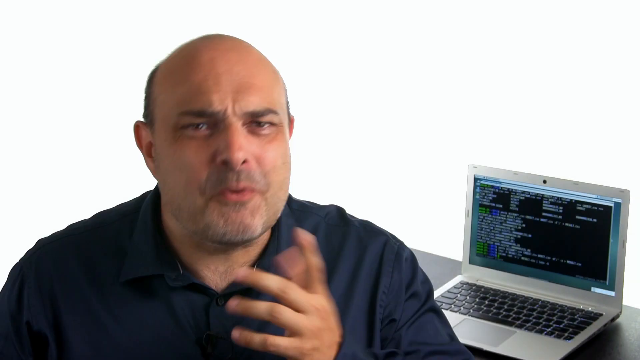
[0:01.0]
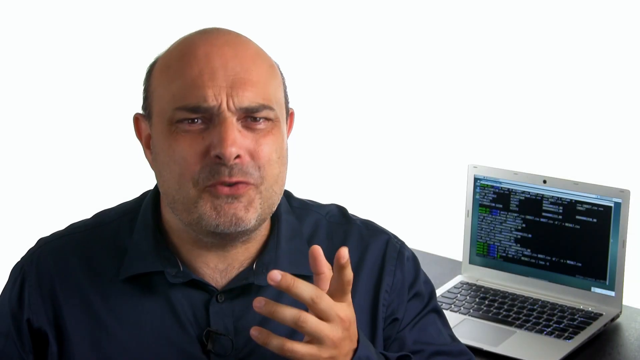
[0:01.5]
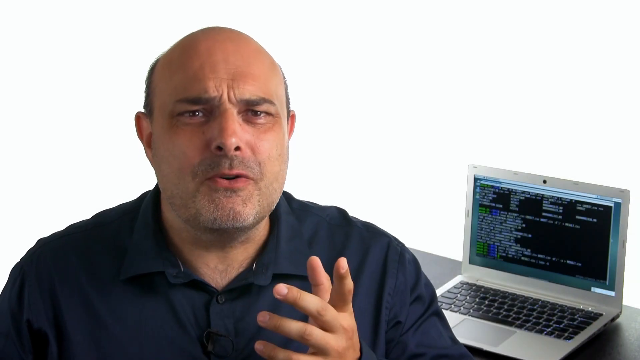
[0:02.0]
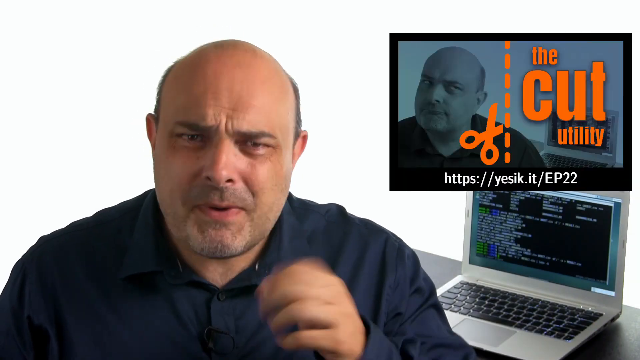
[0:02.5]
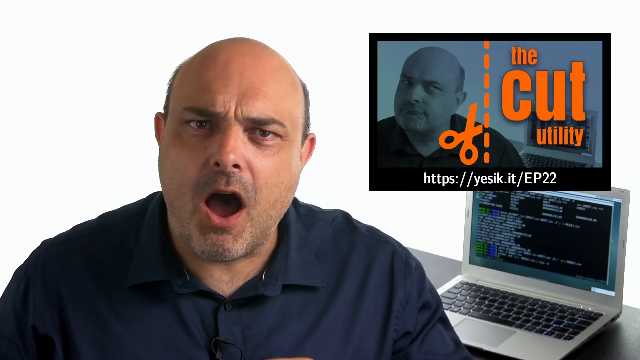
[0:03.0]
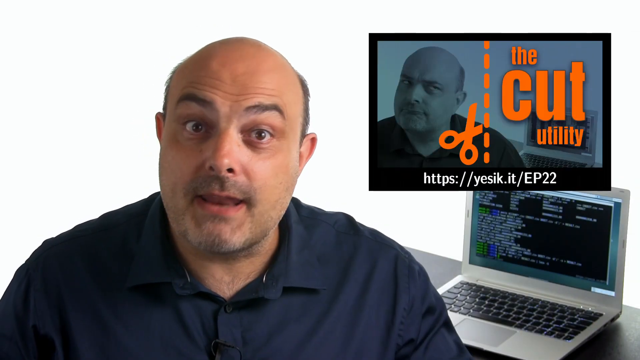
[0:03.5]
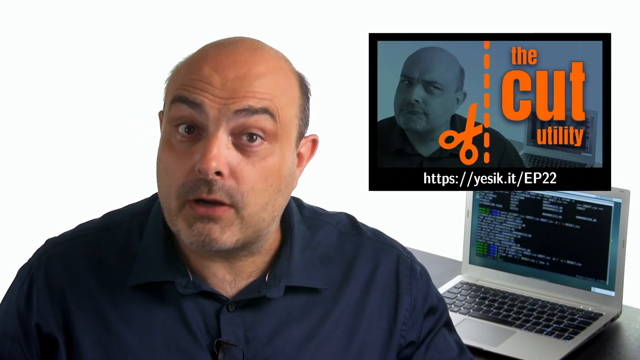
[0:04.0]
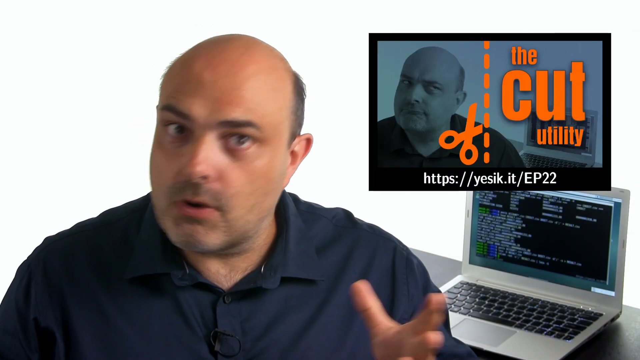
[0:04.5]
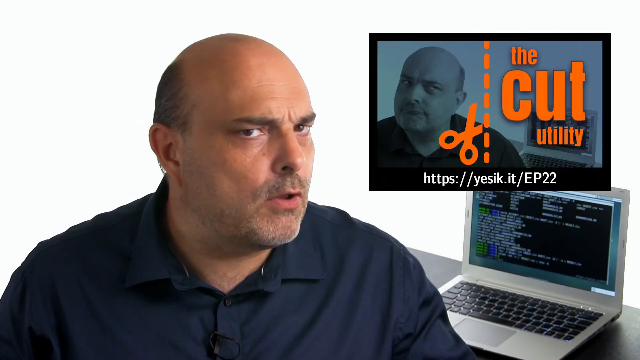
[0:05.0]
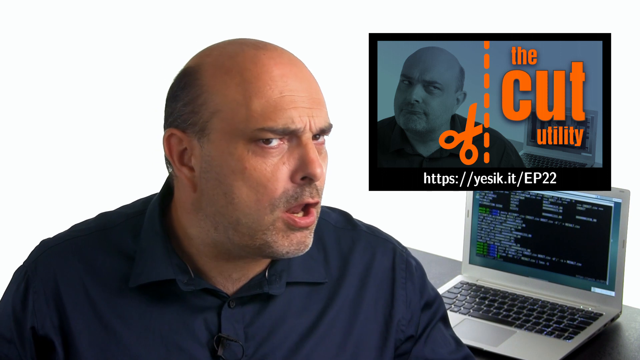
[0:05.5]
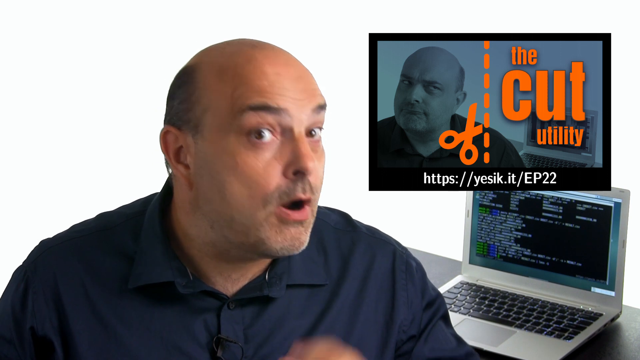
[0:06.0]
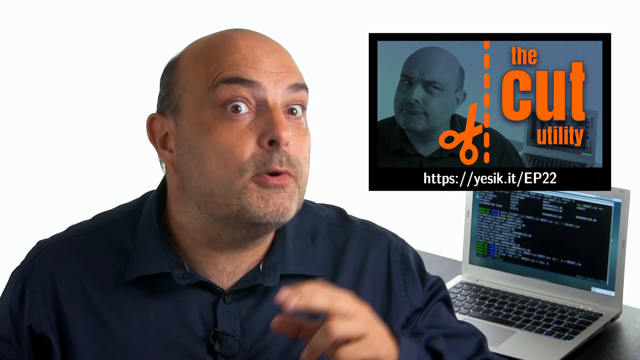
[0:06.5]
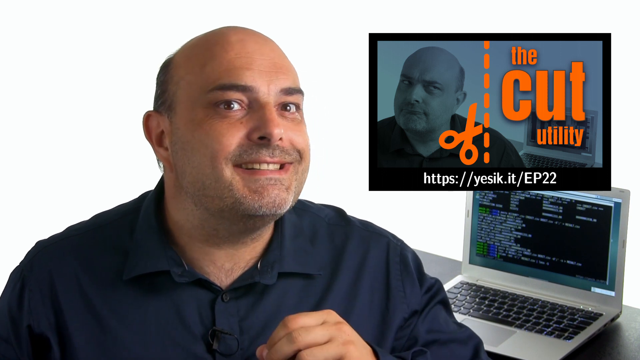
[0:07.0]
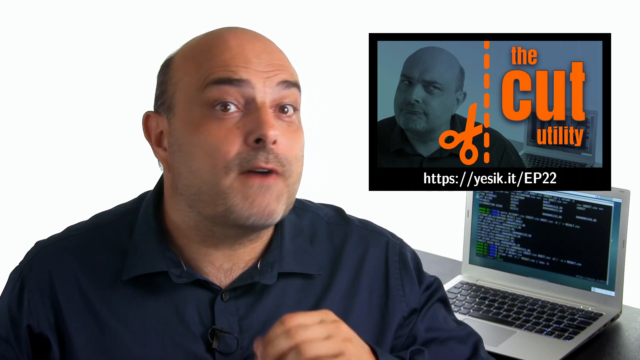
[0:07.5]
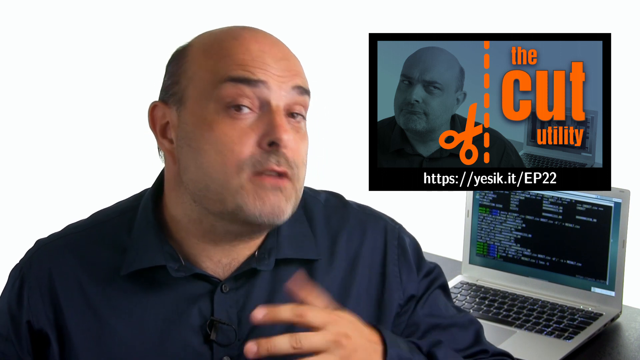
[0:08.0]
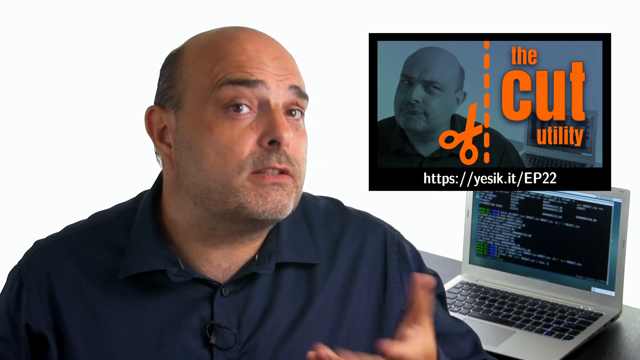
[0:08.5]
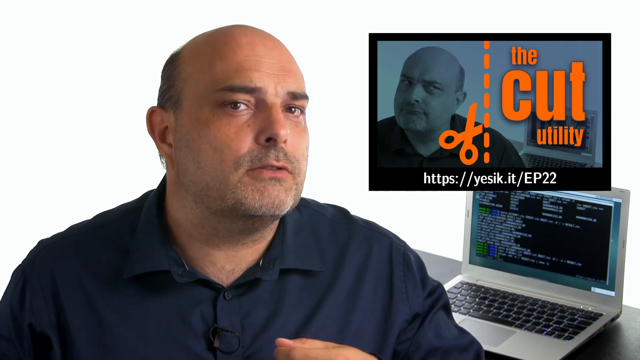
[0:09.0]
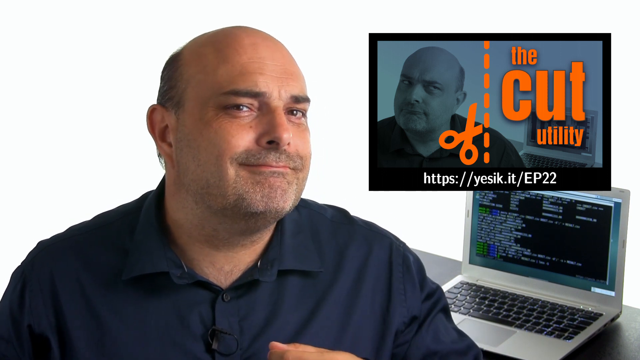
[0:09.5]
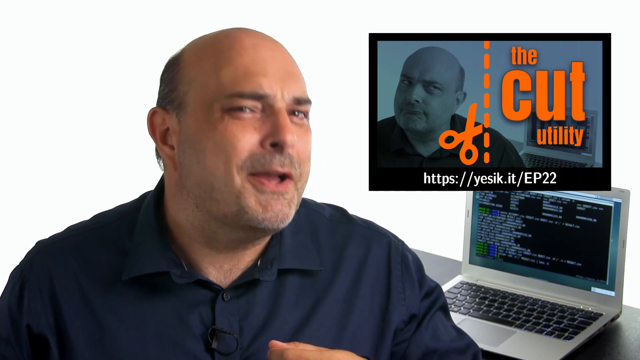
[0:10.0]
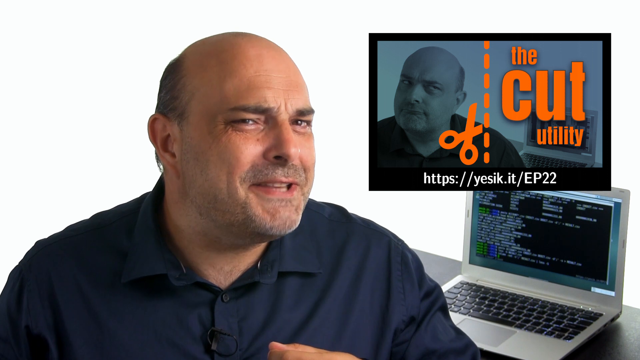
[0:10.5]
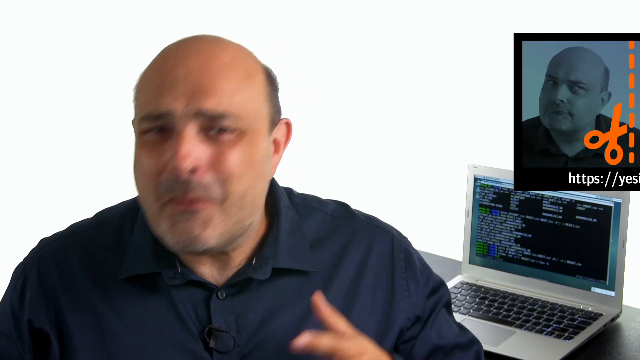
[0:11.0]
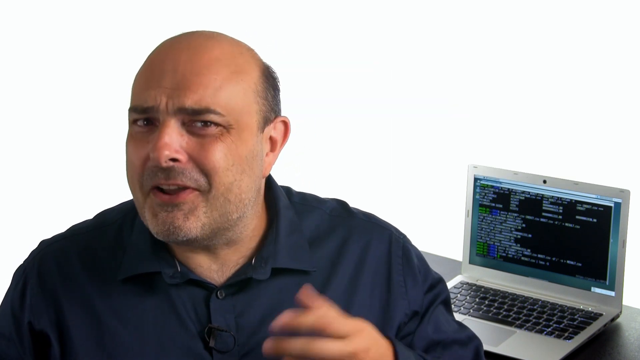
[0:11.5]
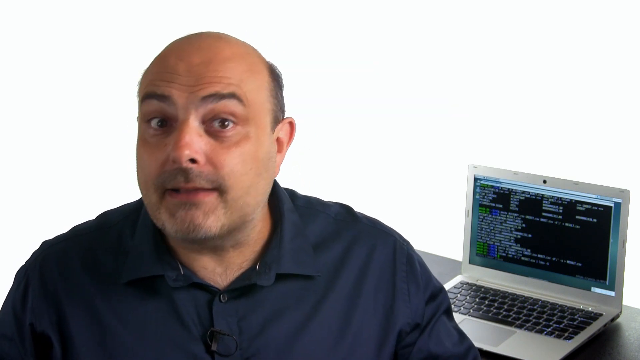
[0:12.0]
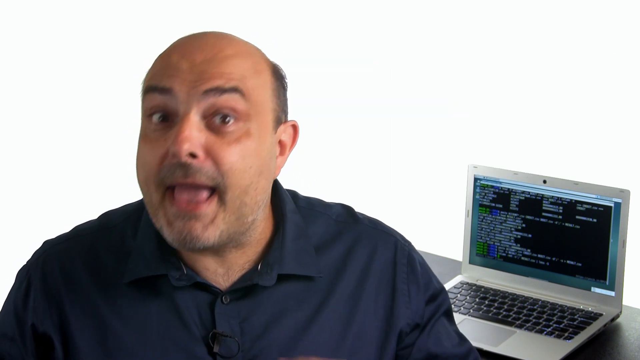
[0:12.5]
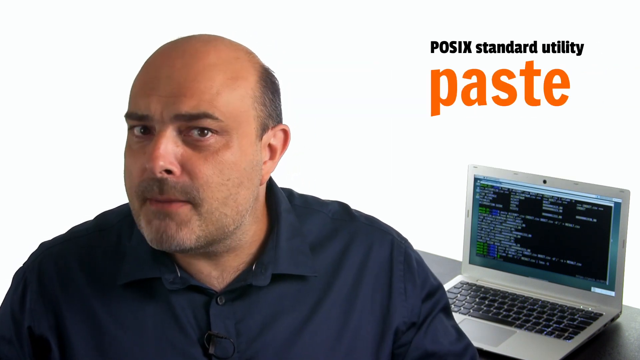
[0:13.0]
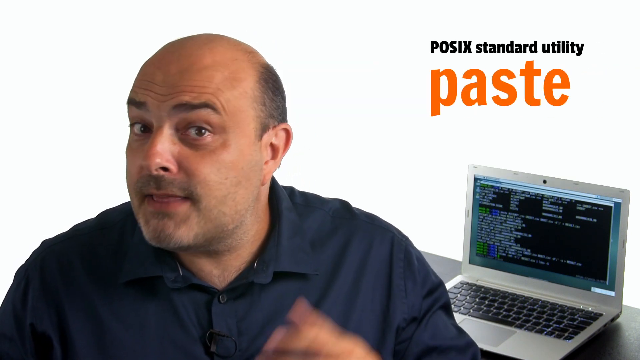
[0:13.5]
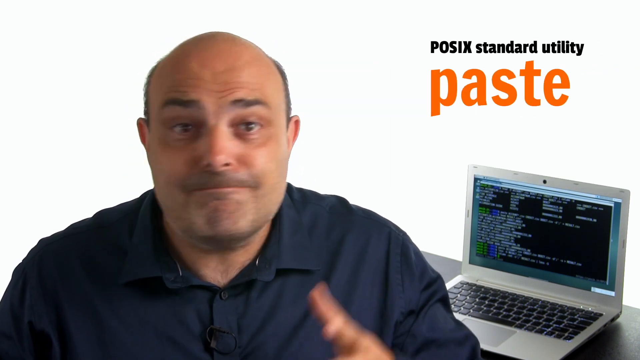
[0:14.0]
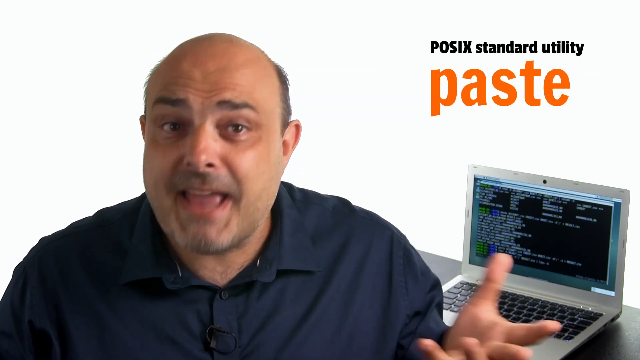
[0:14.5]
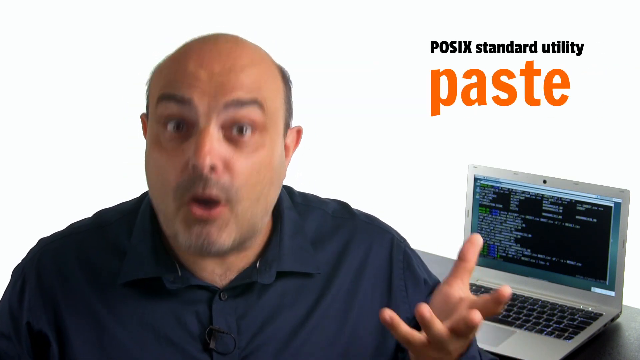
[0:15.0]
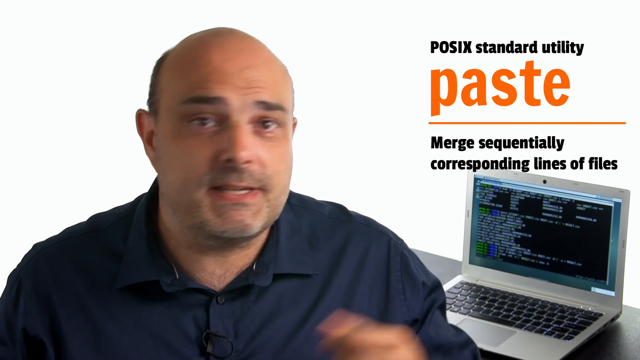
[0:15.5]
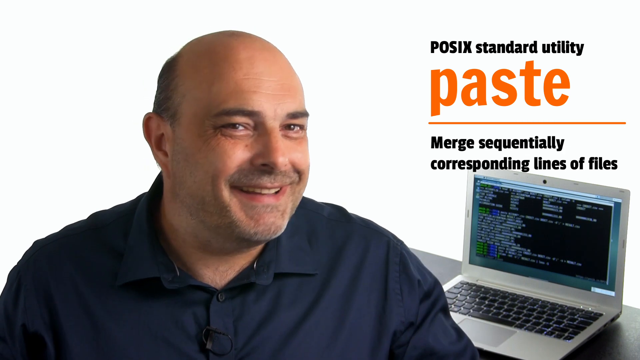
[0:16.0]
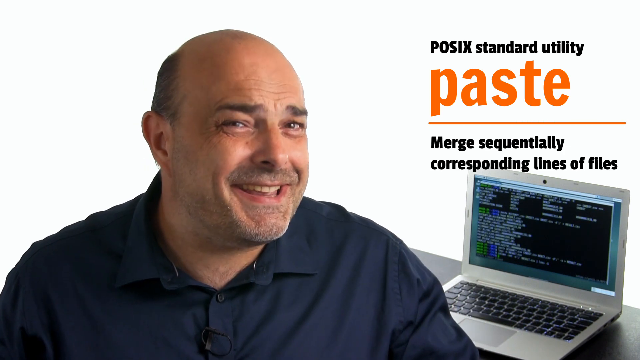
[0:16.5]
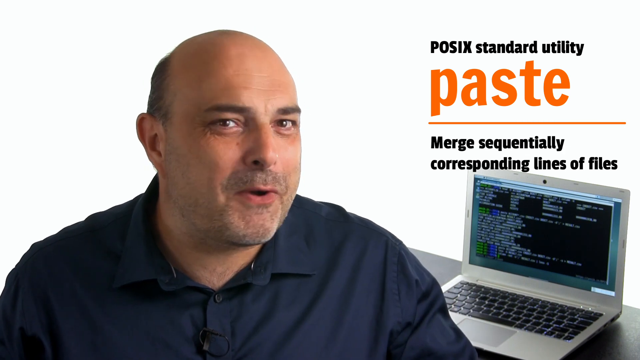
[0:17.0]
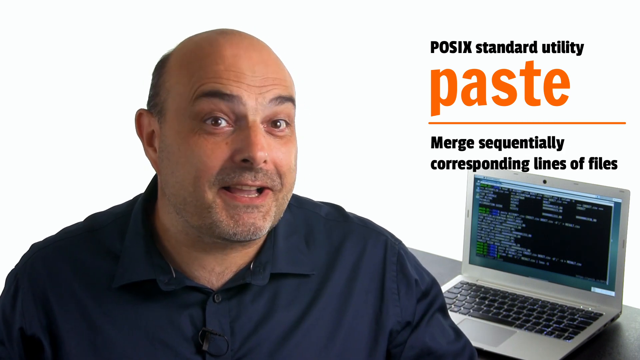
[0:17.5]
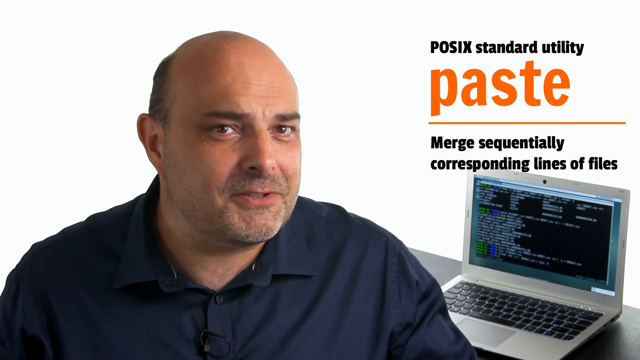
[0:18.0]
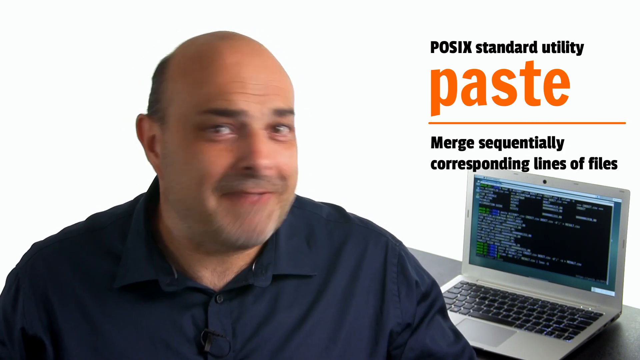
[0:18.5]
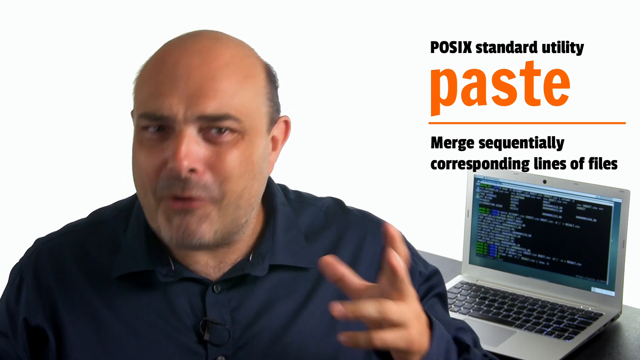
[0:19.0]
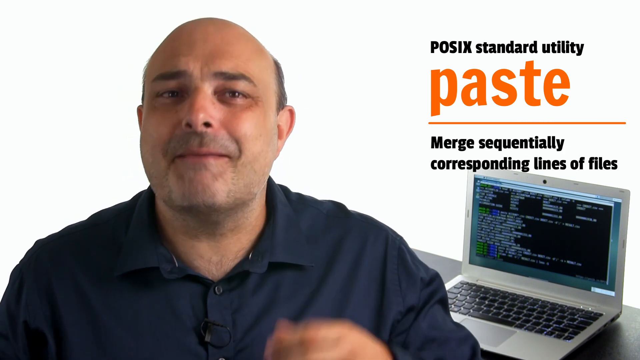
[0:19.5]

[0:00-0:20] A man is on the left side of the frame, extending a little past halfway across, visible from the shoulders up. He is balding on top with short hair on the sides, has a very small hint of stubble, and wears a blue polo shirt. Behind him is a white background, and down to the right is an open gray laptop with black buttons and a black screen covered in white text. The man looks forward and raises his right hand, showing the back of his ring, middle and pointer fingers with his thumb up, shaking it a little. He leans his head to the right and leans in a little. A black-bordered inset containing the man's head then comes in from the right. On its left is a pair of orange scissors reaching down to his chin, with a dotted line through the center. To the right, text reads "the cut utility," with a link and the episode number below it. In the small inset video, his chin is turned to the left and his head is kind of tilted to the right at the top. He raises his eyebrows, raises his right hand, kind of waves it out and back down, turns his head to the right while squinting, and raises his eyebrows as he moves his hand back up. He kind of makes an "are you serious" face and starts talking, his head slightly turned to the right and then to the left, as more text comes in from the right. His right hand stays up, waving, sometimes with the fingers up, sometimes with the thumb up and fingers out.